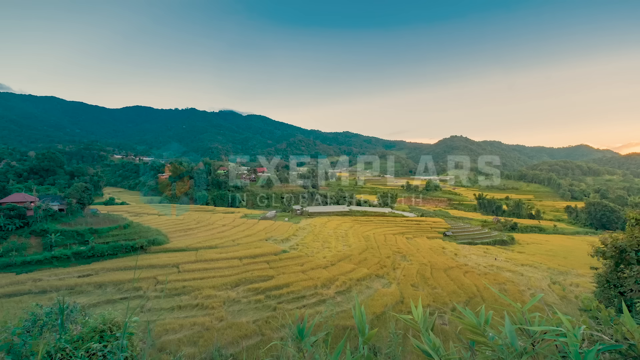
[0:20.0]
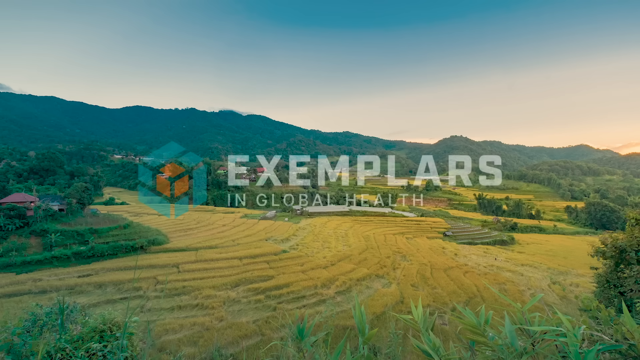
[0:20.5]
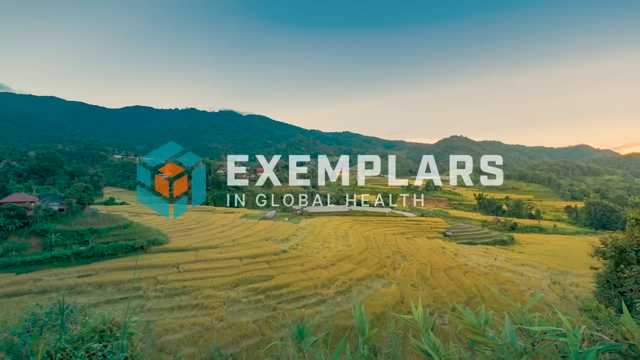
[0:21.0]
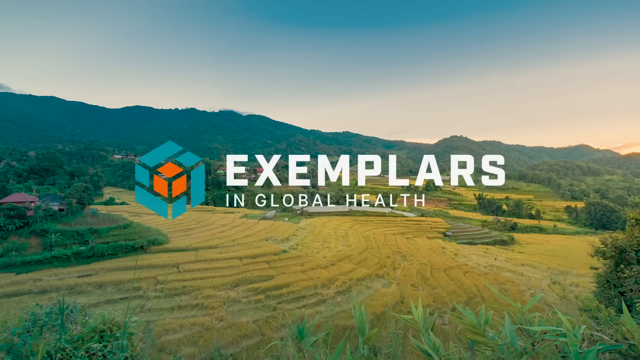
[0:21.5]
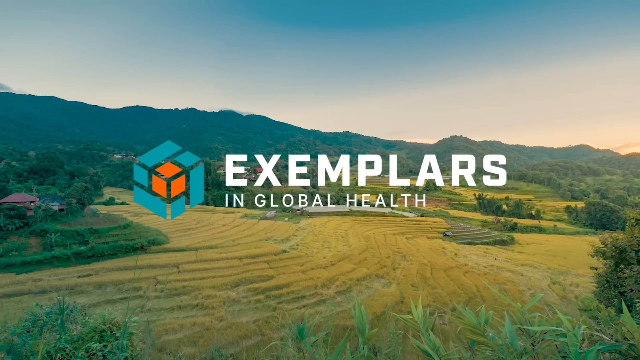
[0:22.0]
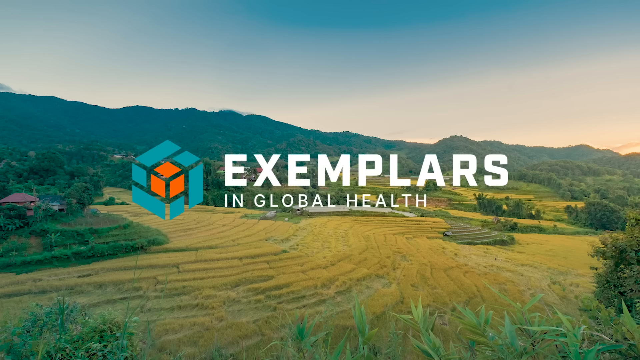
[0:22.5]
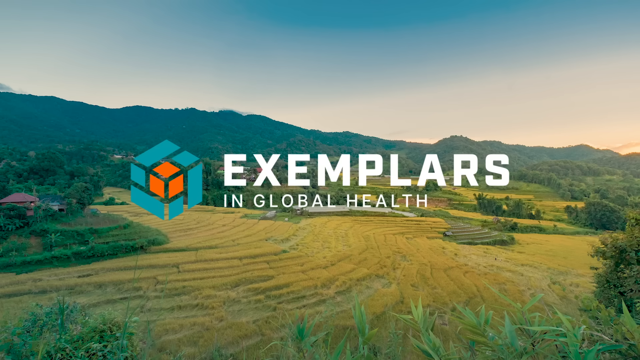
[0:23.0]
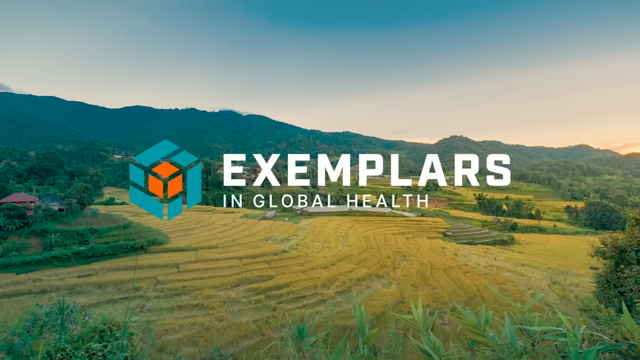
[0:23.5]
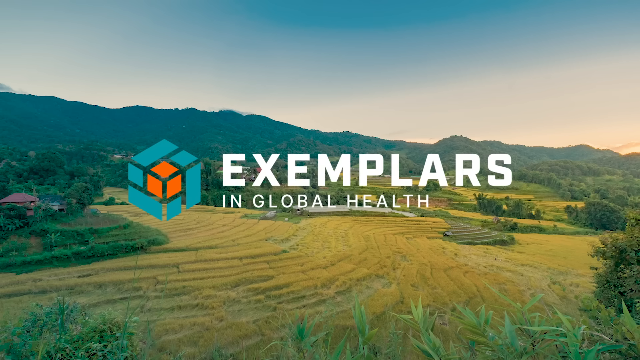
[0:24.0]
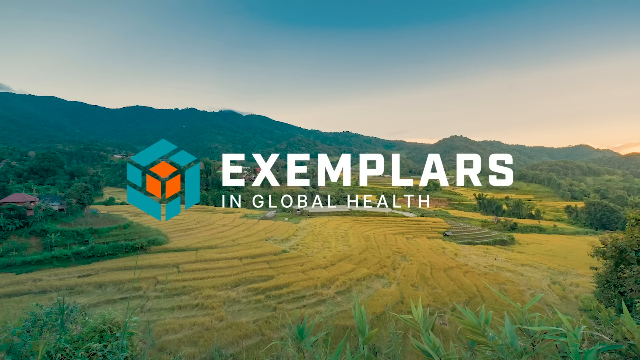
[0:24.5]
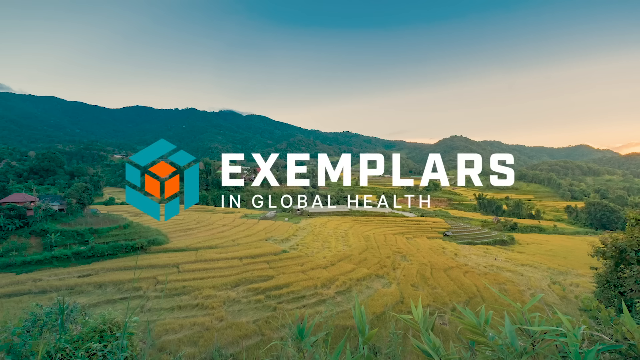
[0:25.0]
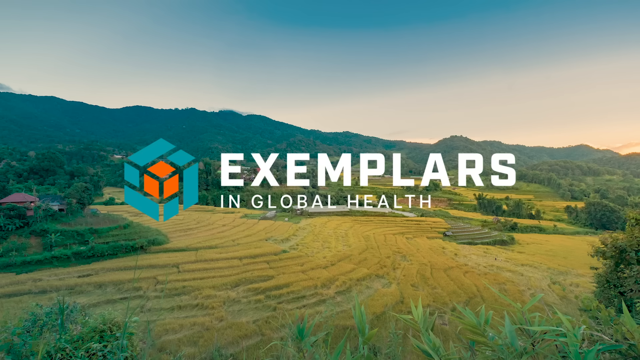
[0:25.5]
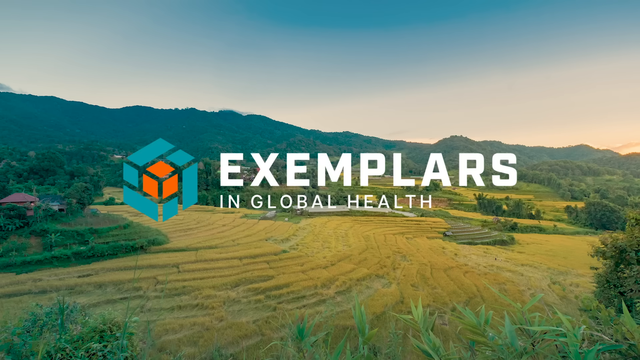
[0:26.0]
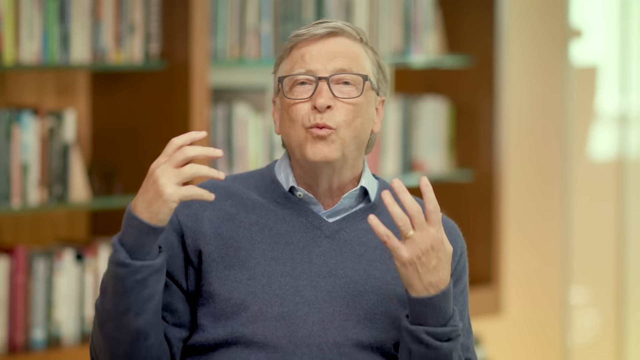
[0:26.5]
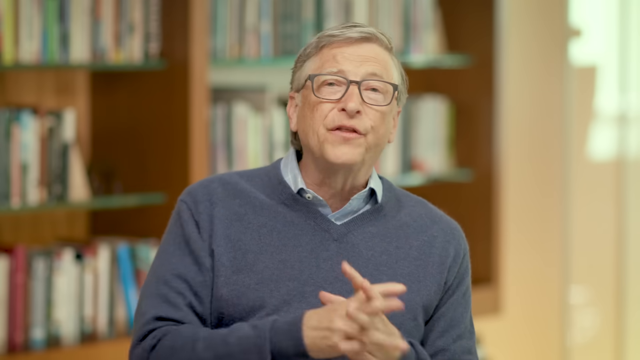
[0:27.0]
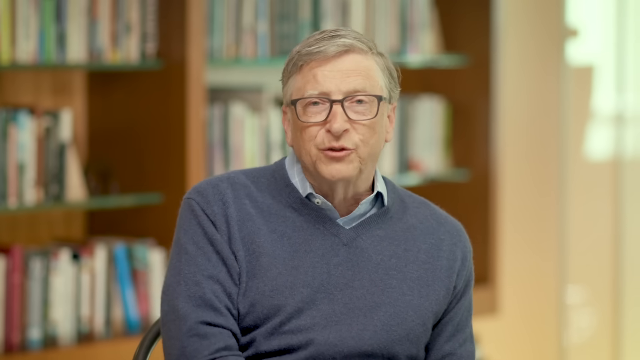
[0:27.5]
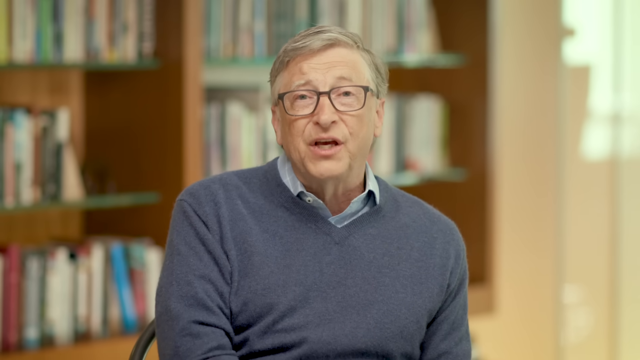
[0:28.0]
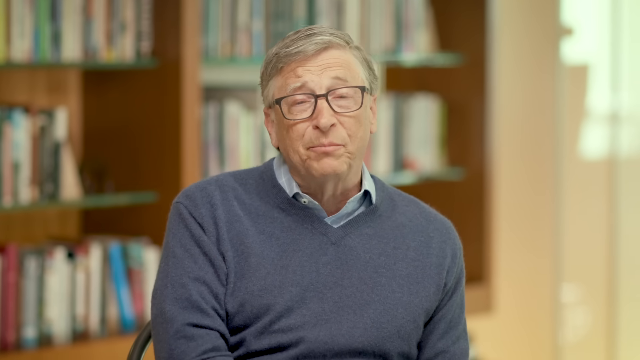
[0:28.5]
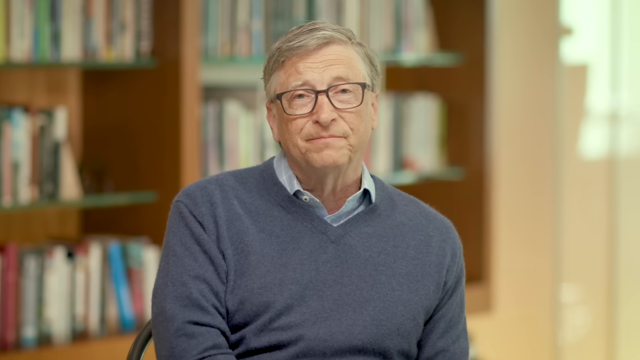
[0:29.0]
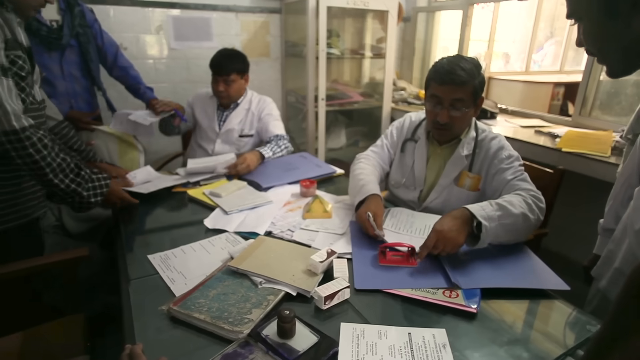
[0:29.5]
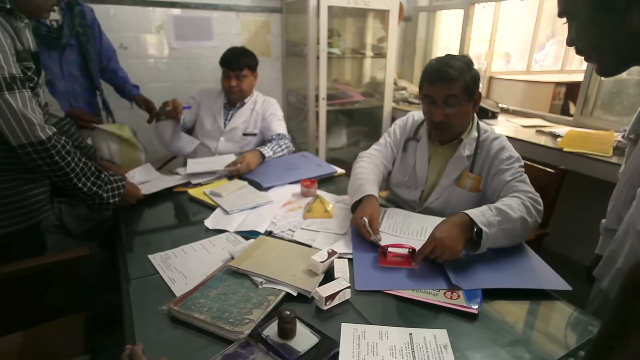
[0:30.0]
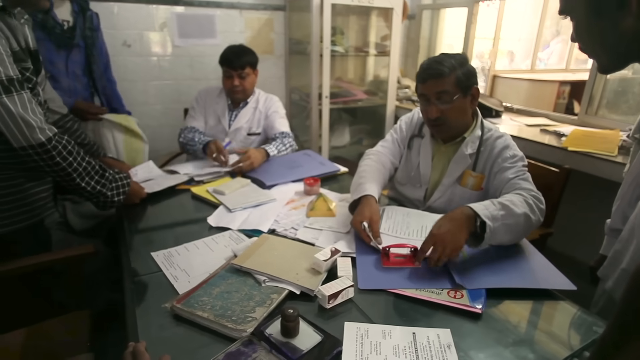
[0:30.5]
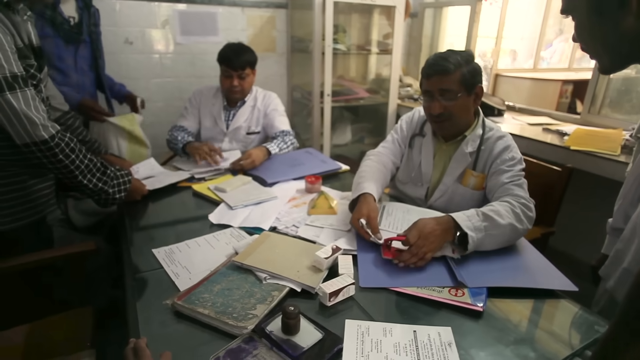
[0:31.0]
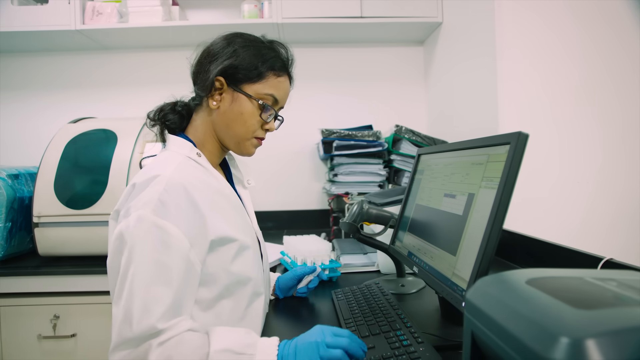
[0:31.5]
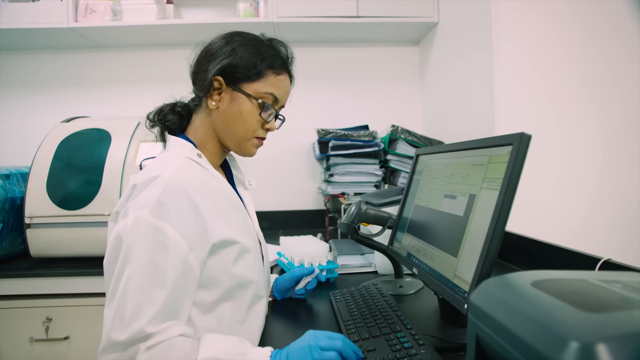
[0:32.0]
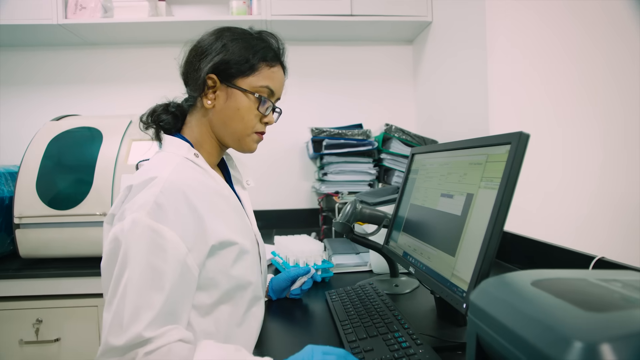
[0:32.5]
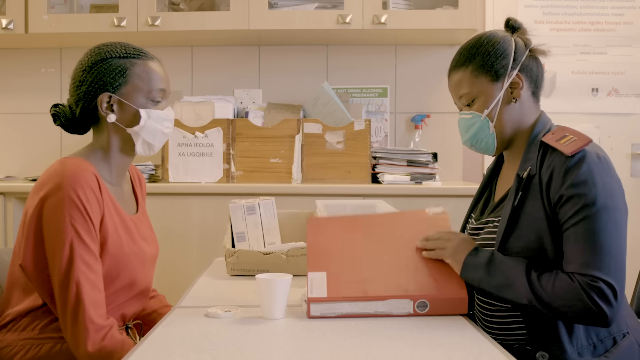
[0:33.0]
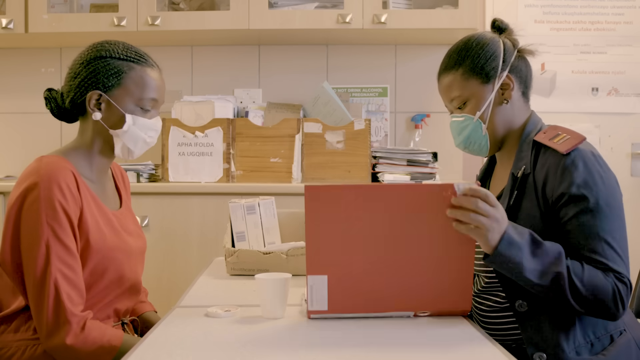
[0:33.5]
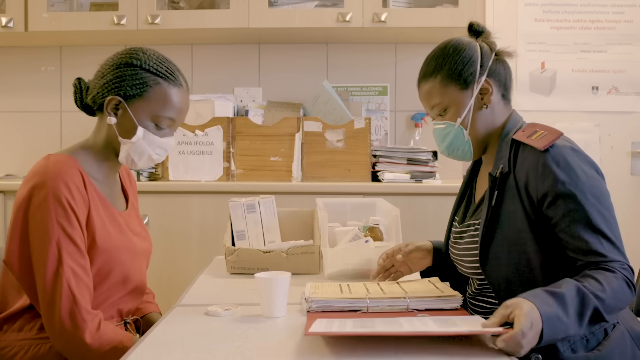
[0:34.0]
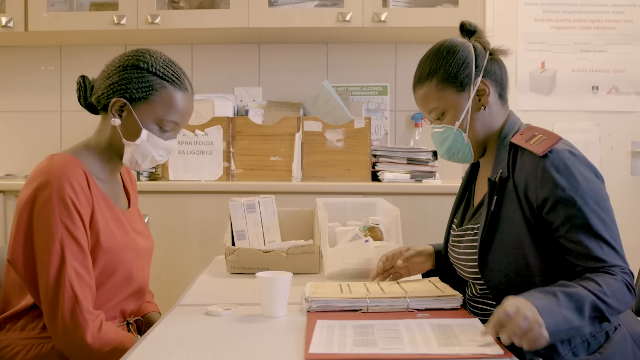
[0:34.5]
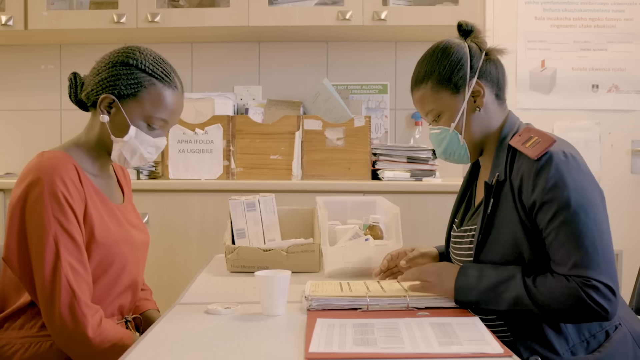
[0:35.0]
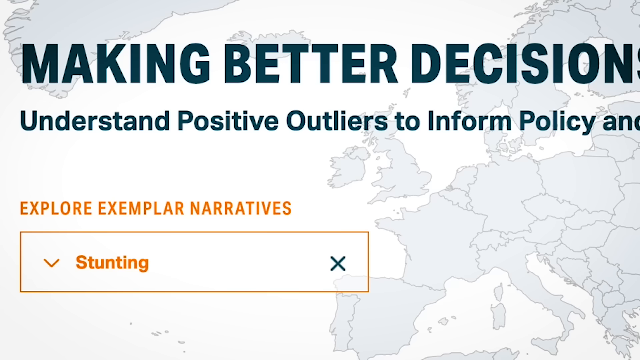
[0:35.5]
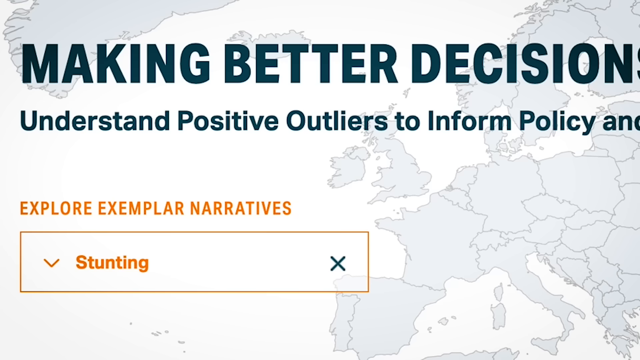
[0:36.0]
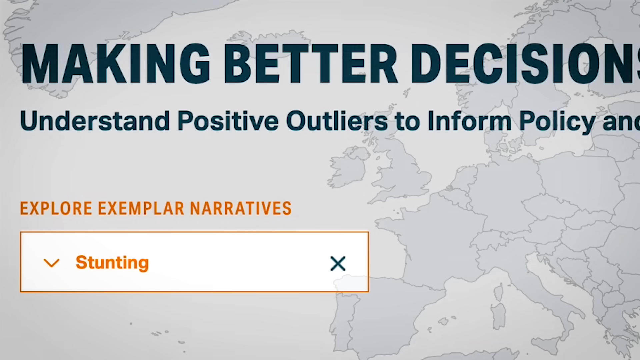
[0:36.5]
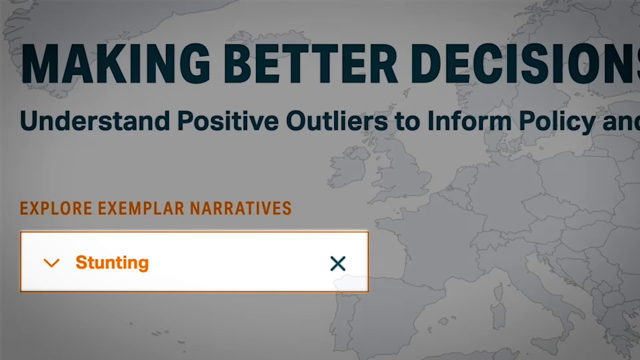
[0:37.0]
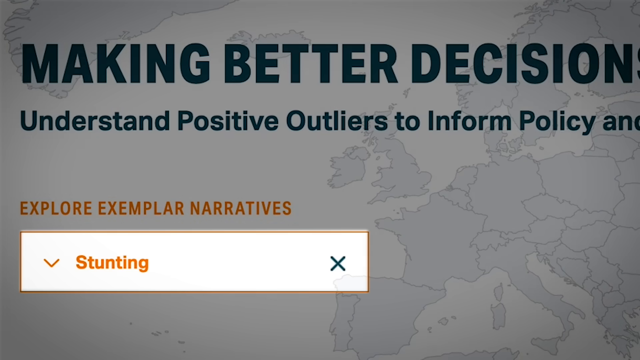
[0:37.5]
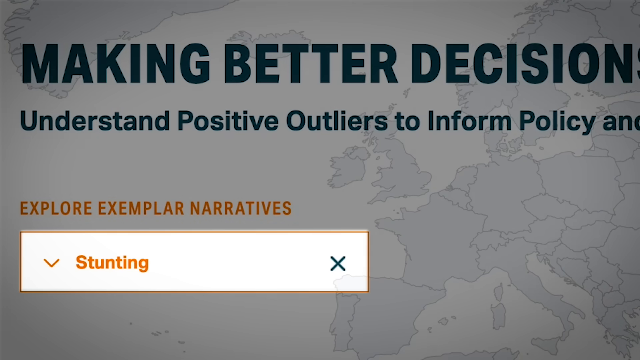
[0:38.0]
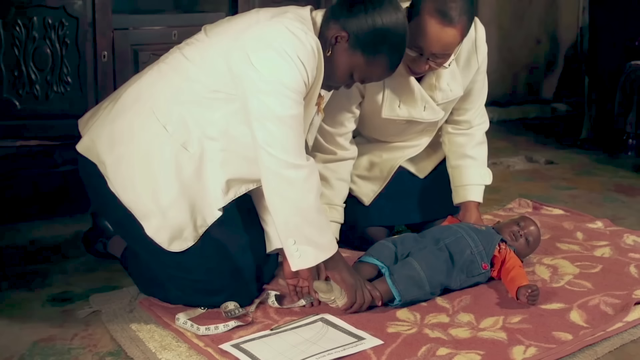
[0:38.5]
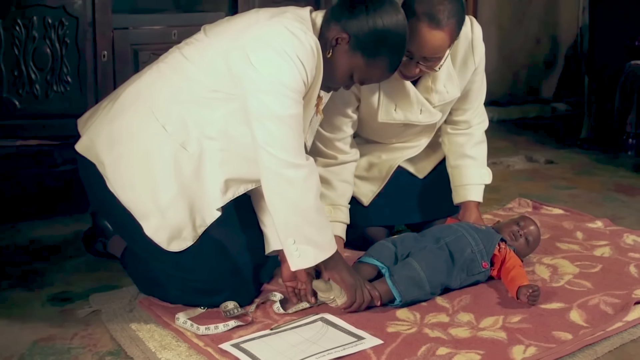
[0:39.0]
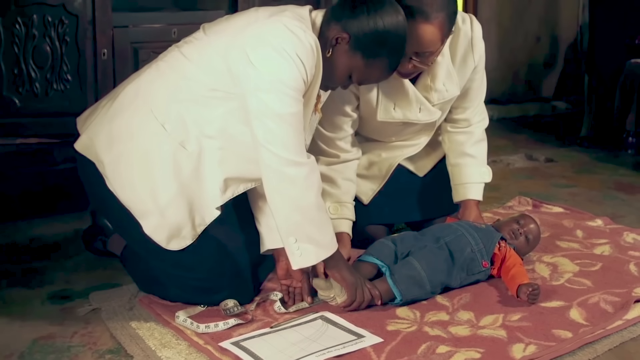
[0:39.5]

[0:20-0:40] An intro shows an outdoor farming area with fields that look similar to rice fields, with overlaid text reading "Exemplars in global health". The video pans to the man presenting towards the camera, then quickly changes to an office-type space with a messy table covered in documentation and books. The men at the table look to be of Indian heritage and wear white doctor lab-style coats with stethoscopes around their necks. Next, a woman in a white lab coat and blue latex-style gloves sits at a desktop computer. The video pans to two women sitting at a table, both wearing face masks; one has a file open on the desk, and it looks like a doctor-patient style discussion. The video then changes to a screenshot of a web page about making better decisions and understanding positive outliers in informed policy, with a map of part of the world behind it.